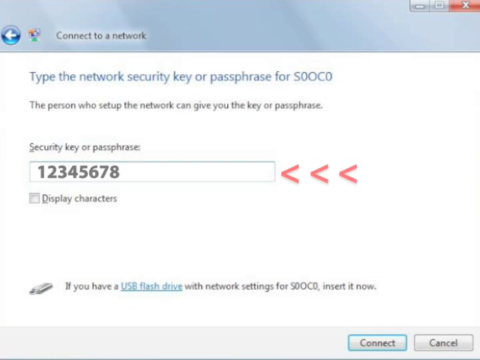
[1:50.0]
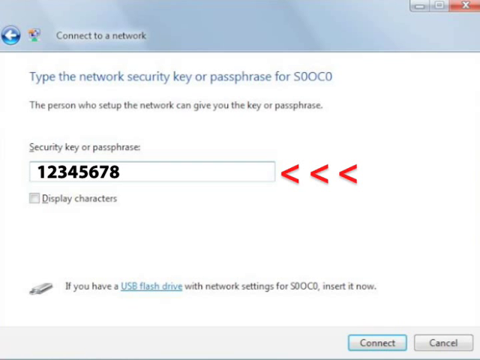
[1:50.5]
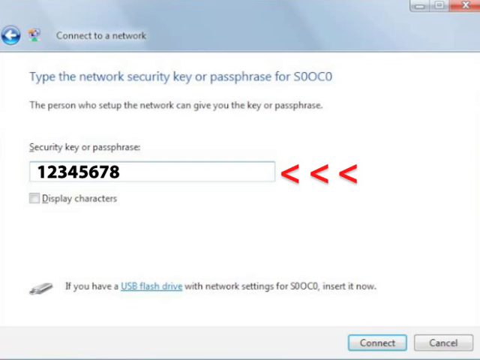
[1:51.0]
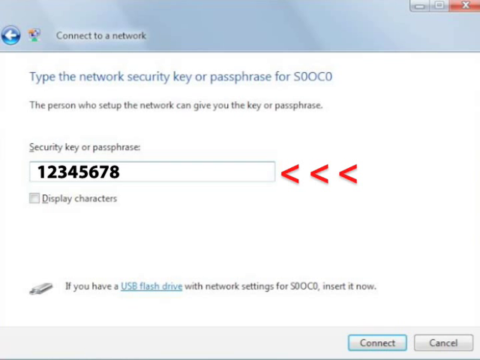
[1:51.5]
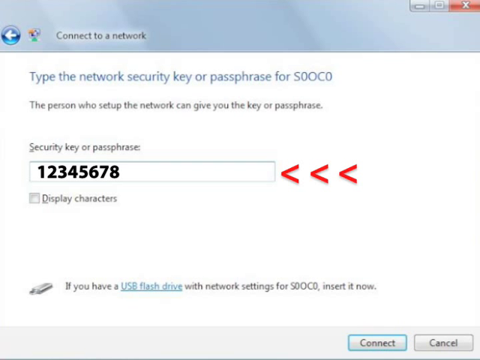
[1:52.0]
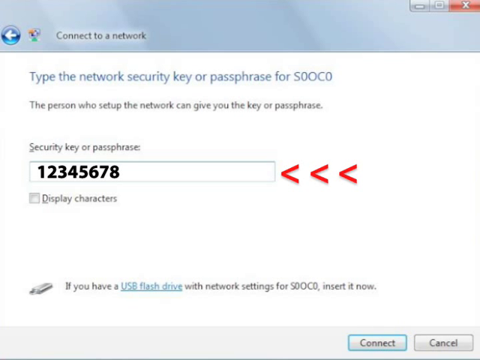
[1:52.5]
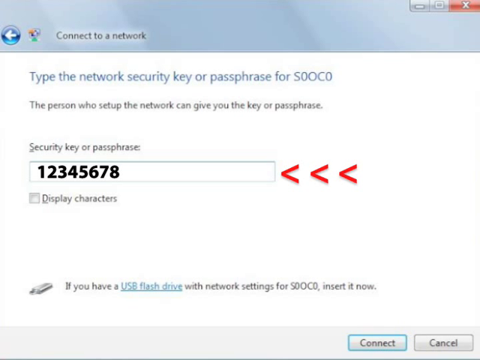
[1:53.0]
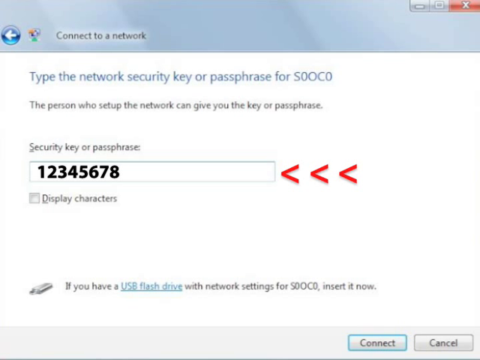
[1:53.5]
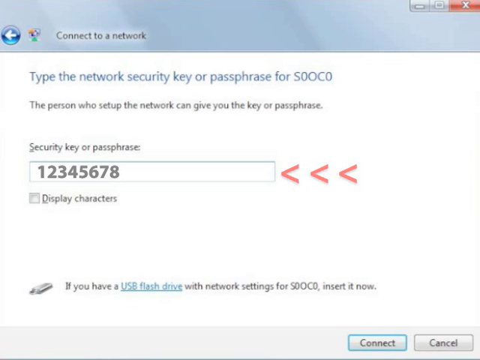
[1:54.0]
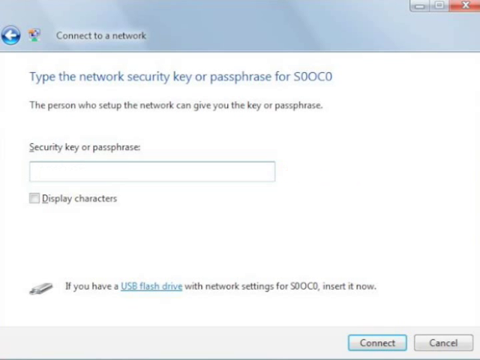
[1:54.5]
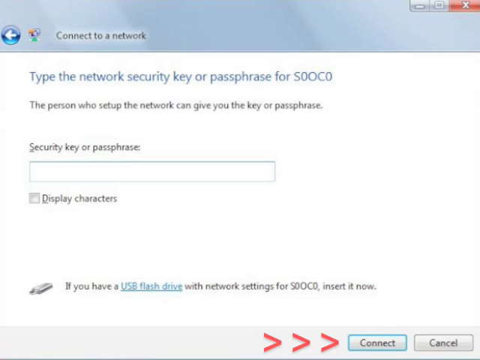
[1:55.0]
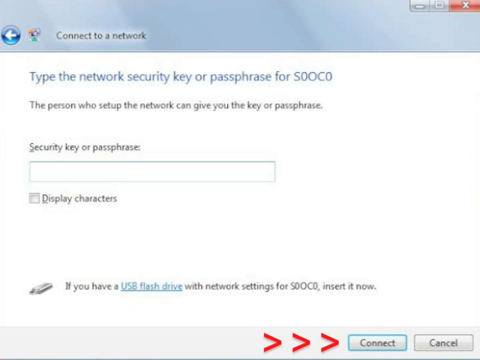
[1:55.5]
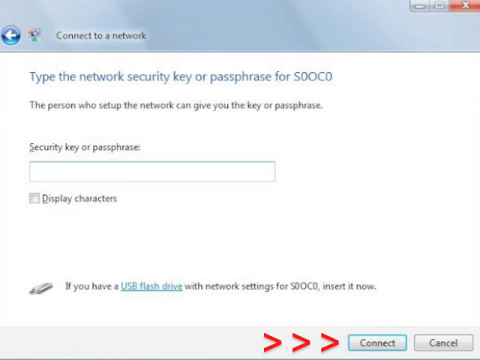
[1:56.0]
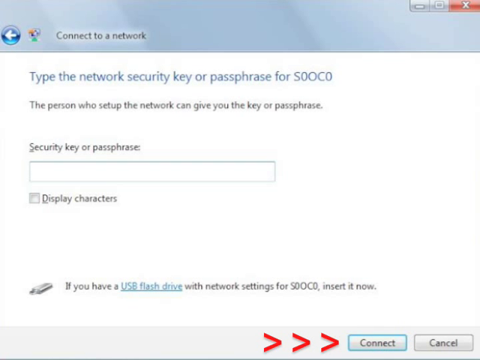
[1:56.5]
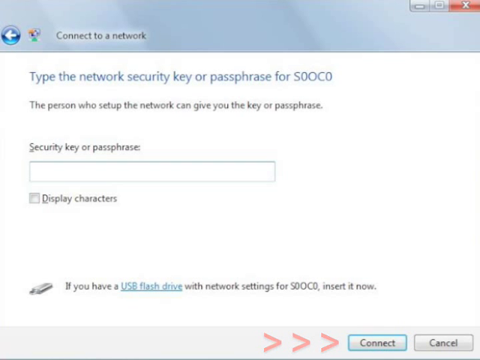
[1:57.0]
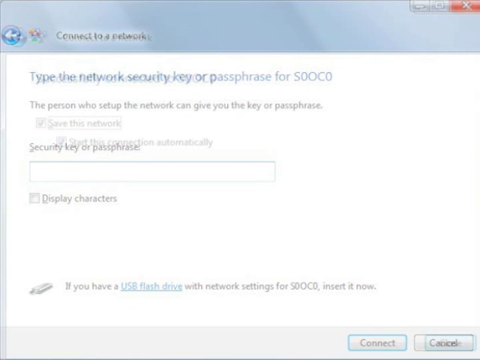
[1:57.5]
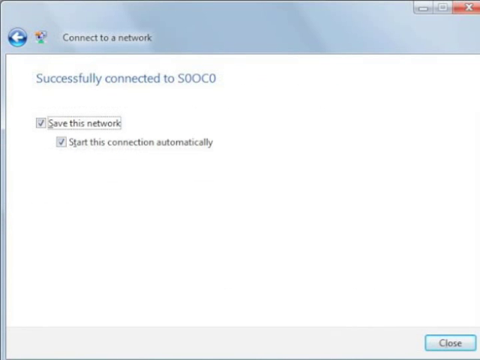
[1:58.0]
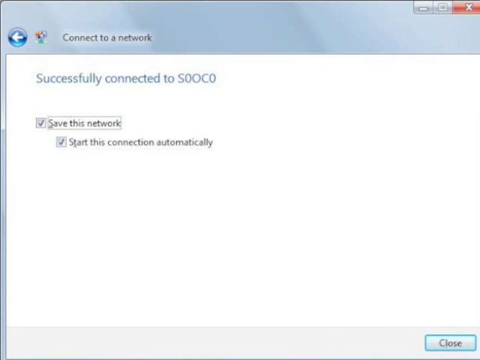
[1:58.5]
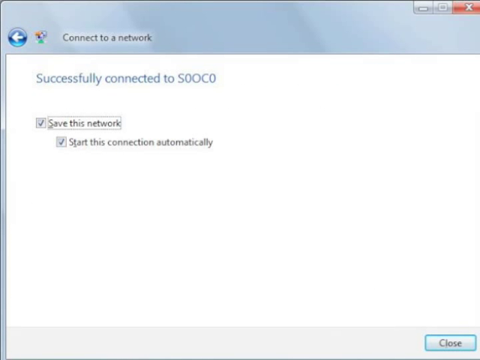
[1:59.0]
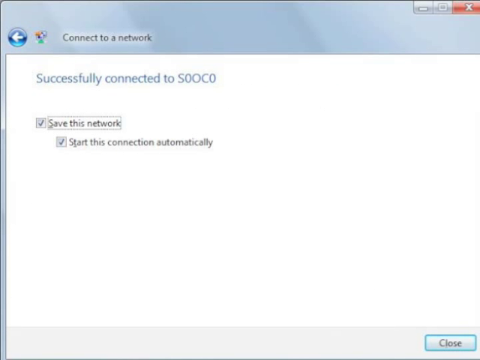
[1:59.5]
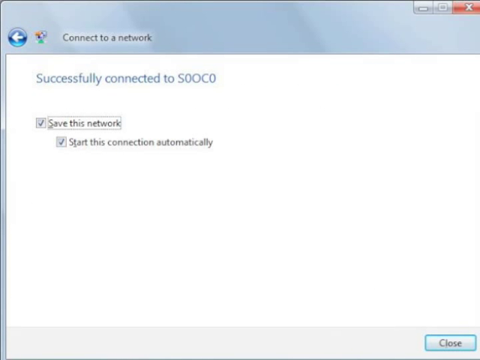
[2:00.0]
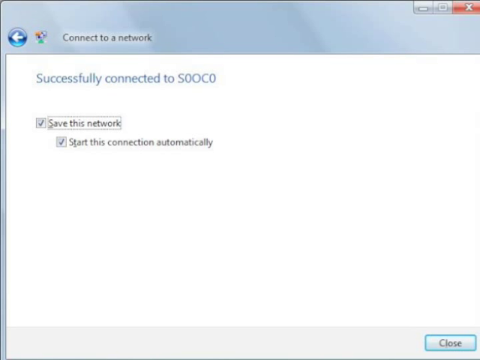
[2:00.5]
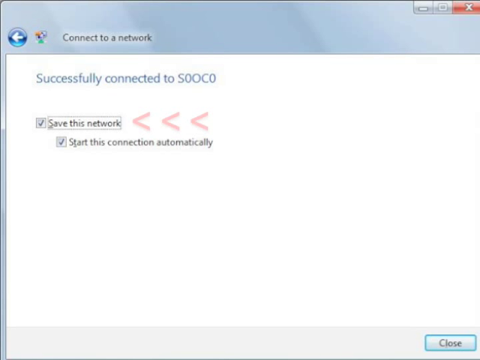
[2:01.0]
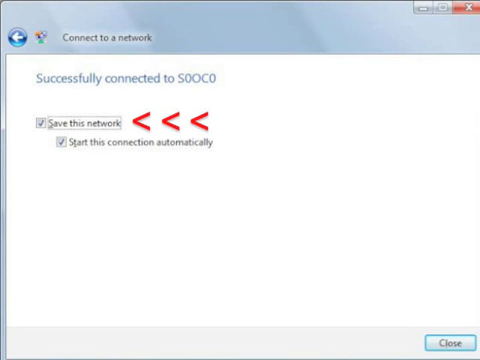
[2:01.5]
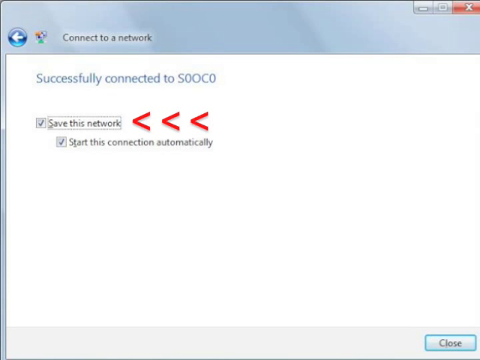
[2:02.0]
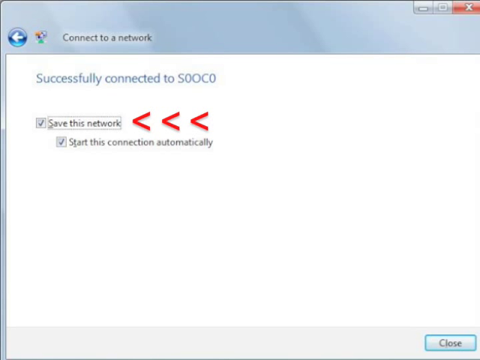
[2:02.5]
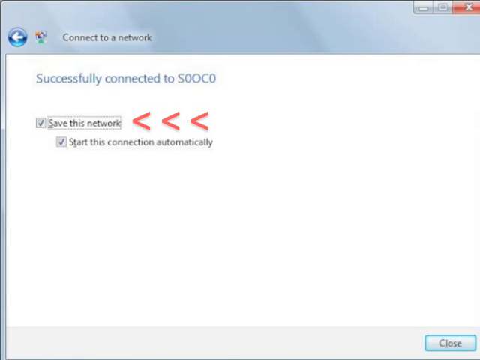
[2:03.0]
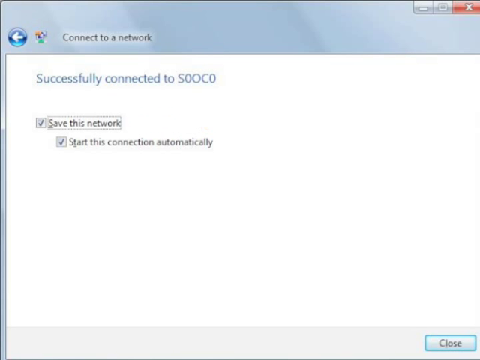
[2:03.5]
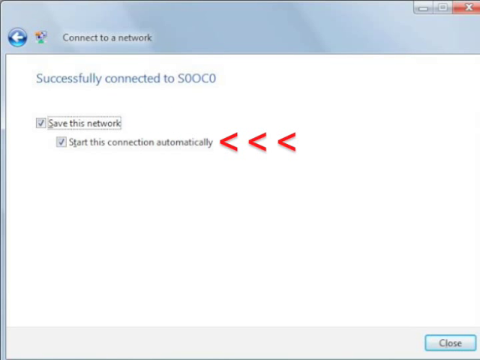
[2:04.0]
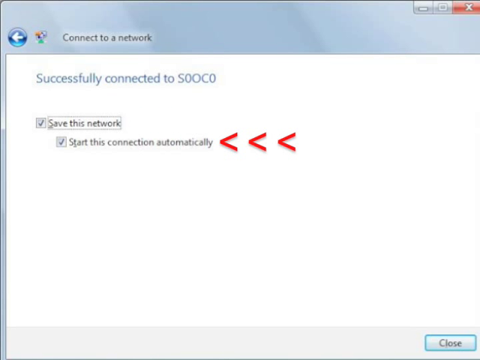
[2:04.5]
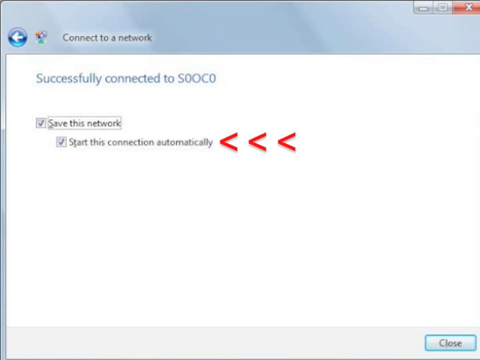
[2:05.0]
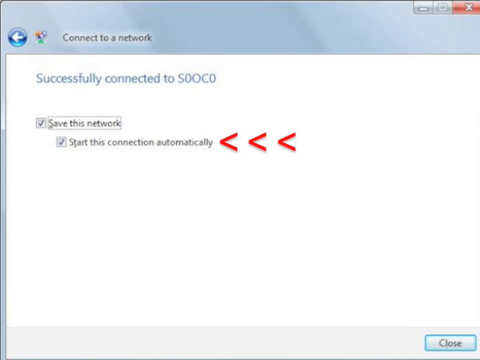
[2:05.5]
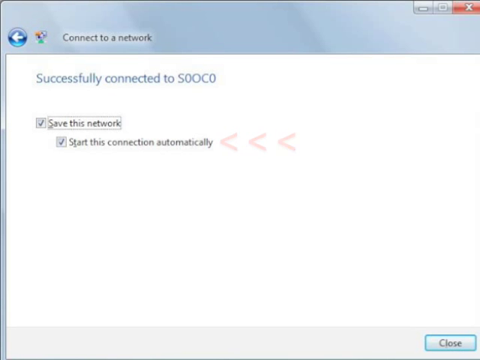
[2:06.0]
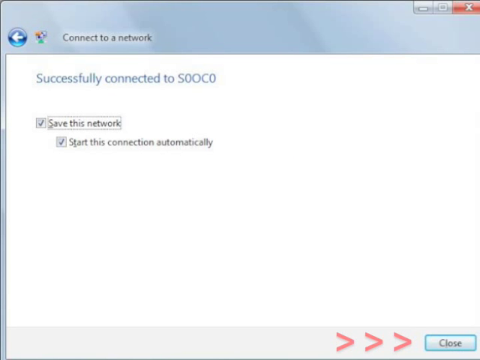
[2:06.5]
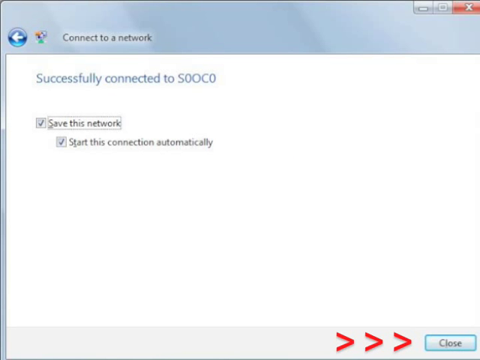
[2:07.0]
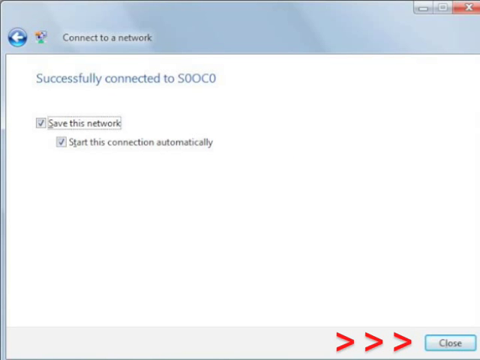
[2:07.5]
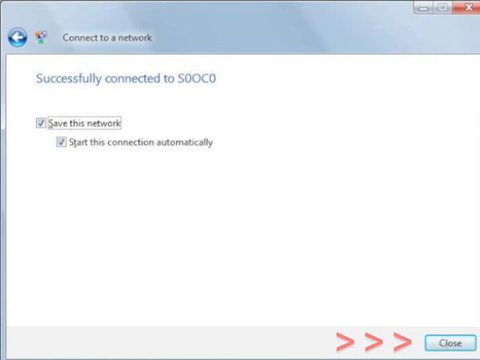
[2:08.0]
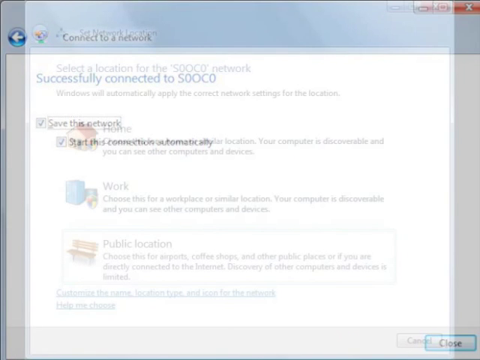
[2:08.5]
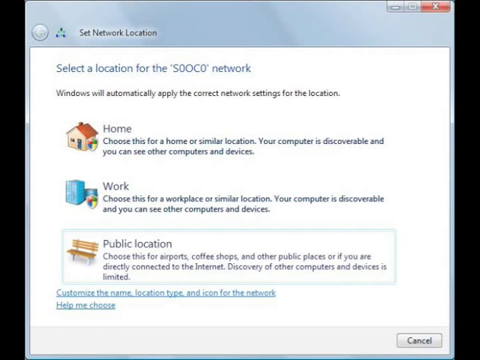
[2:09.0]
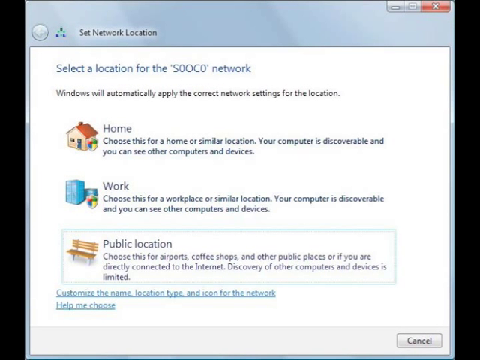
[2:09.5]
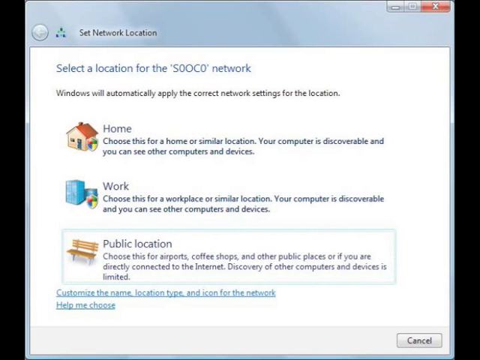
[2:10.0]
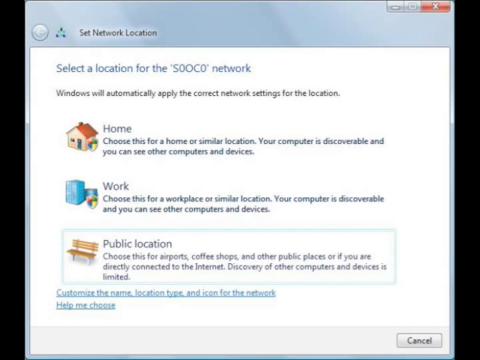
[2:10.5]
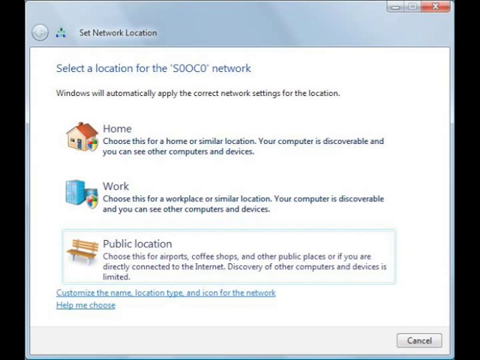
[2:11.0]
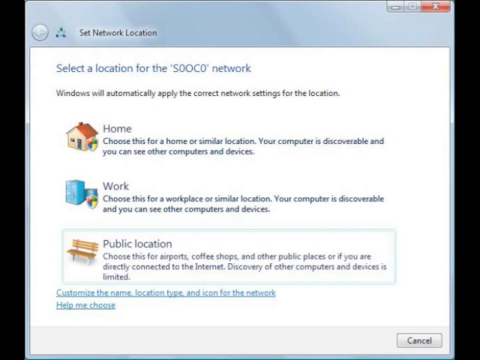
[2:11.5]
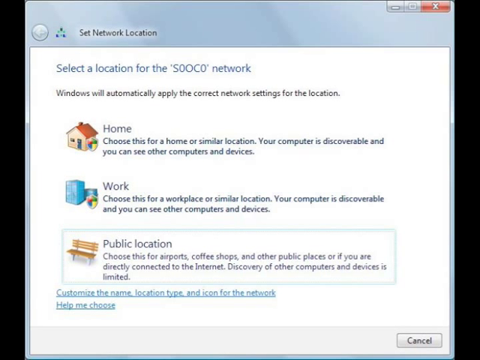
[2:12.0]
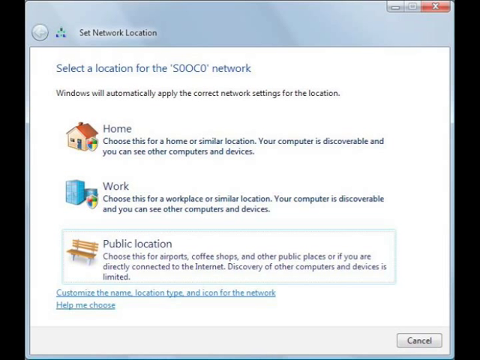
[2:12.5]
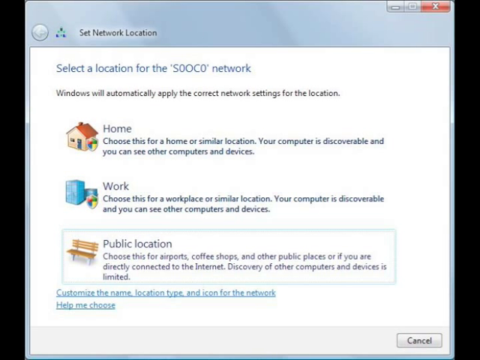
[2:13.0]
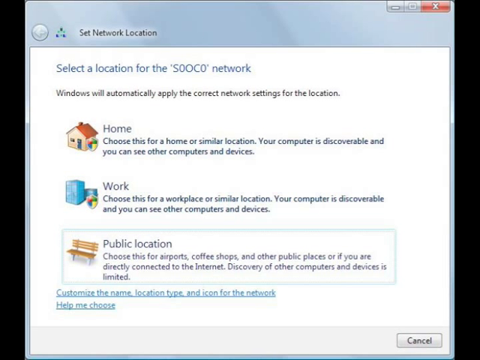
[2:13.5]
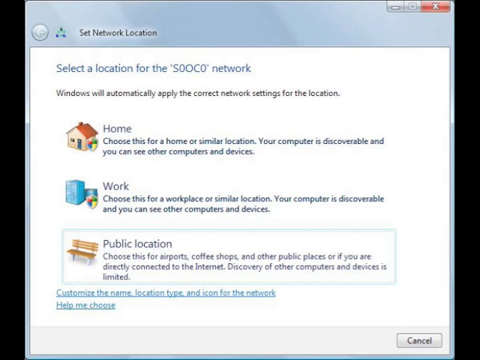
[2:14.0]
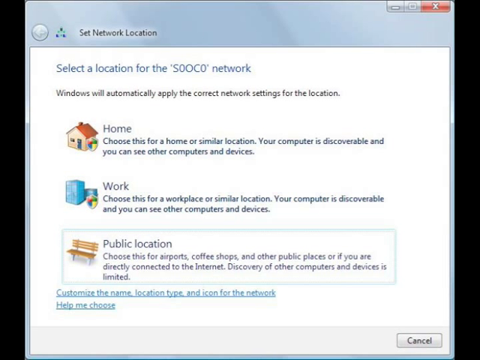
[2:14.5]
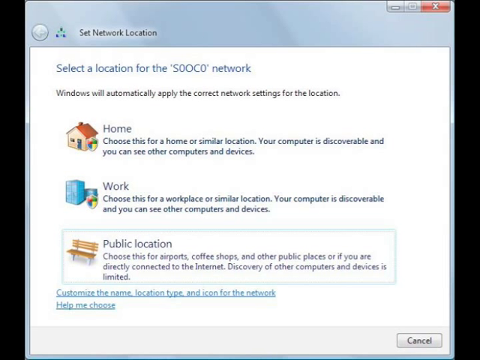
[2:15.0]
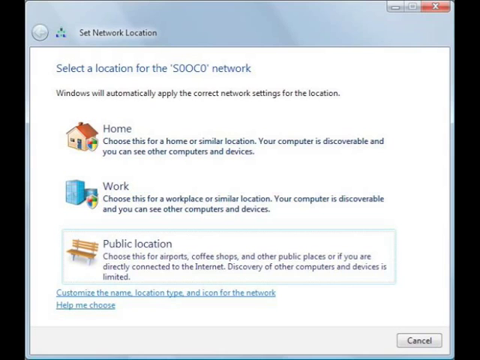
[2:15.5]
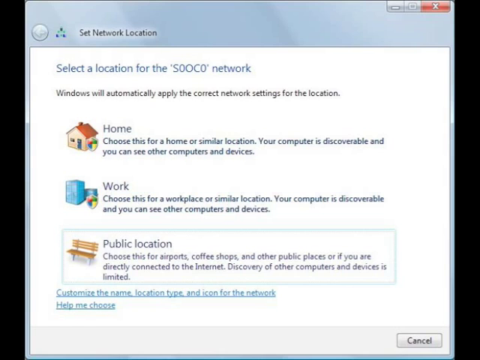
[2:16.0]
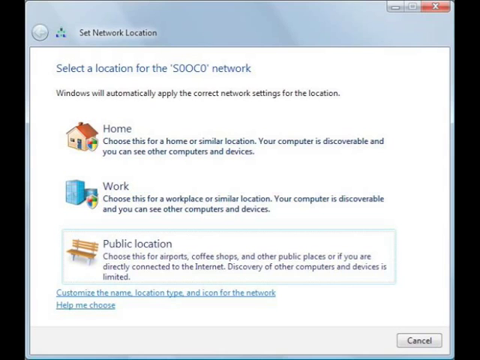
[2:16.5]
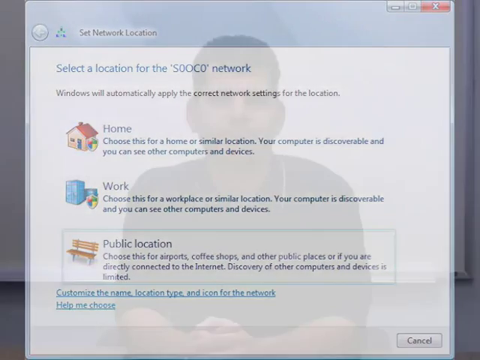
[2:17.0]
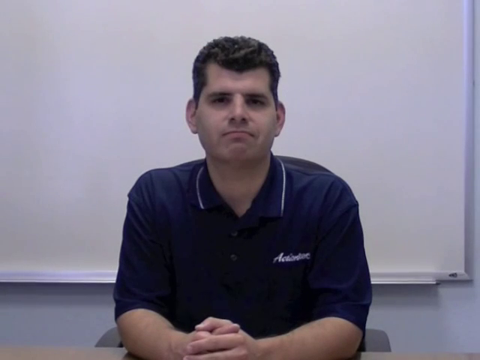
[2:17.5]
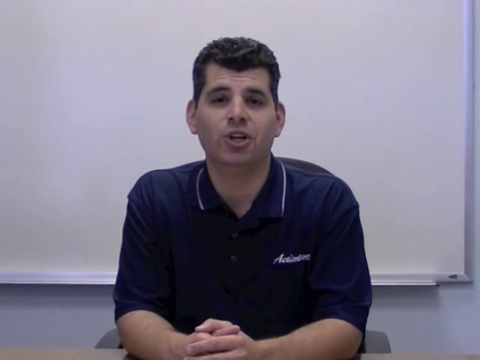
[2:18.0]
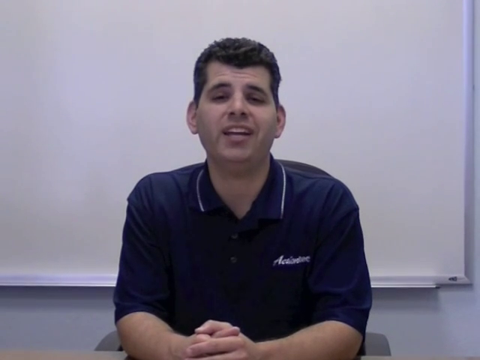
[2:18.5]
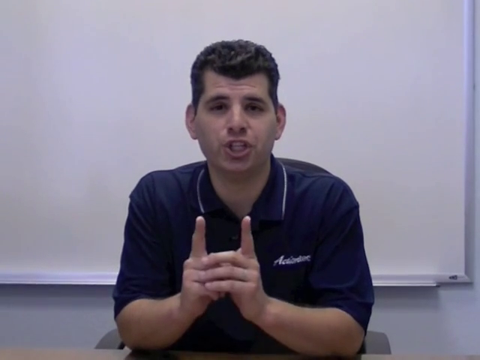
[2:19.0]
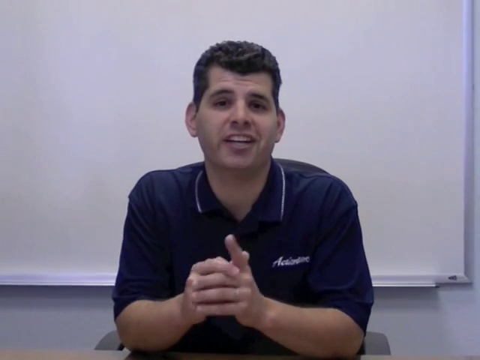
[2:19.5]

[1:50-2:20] A computer screen shows a window for connecting to a network called S0OC0, with an input for a security key or passphrase. An overlay passphrase of 12345678 is entered in the input, with three red arrows to its right pointing towards it. The overlay passphrase and the red arrows are then removed. The video transitions to a screen showing a successful connection to the S0OC0 network, with two checkbox options: "save this network" and "start this connection automatically." Red arrows point first at the first option, then disappear and point at the second option, showing the checkboxes as ticked. Another window follows, a set network location window with three options: home, work and public location; the public location option appears to have an outlined blue box around it. The video then transitions to a man sitting down and facing the camera with his arms crossed and his hands knitted together; he then points his two index fingers up towards the camera. The video then transitions to show a man sitting down and facing the camera.